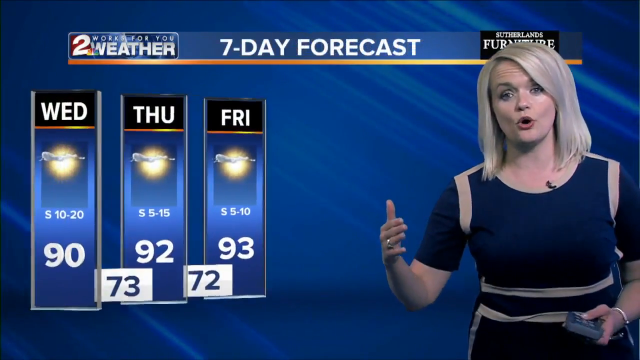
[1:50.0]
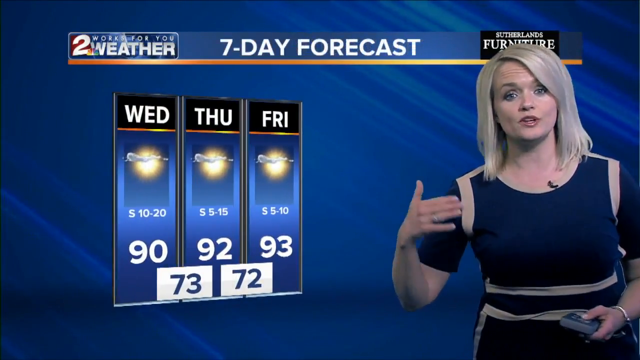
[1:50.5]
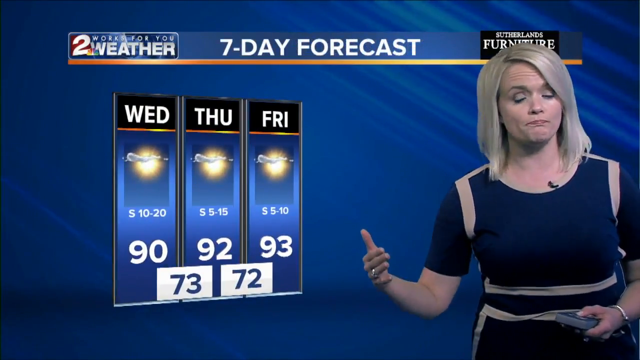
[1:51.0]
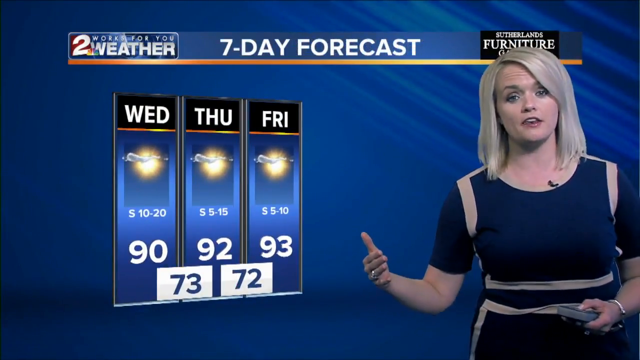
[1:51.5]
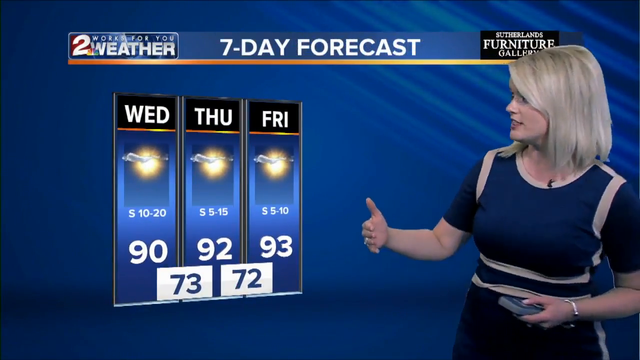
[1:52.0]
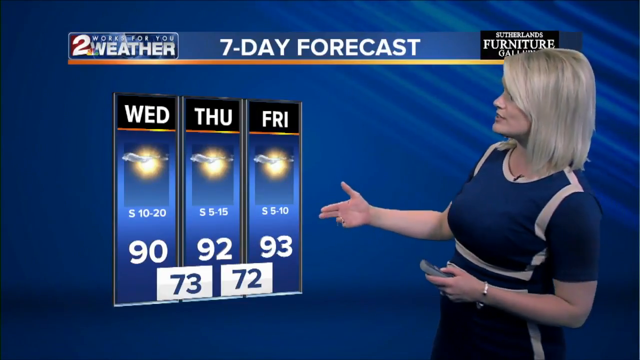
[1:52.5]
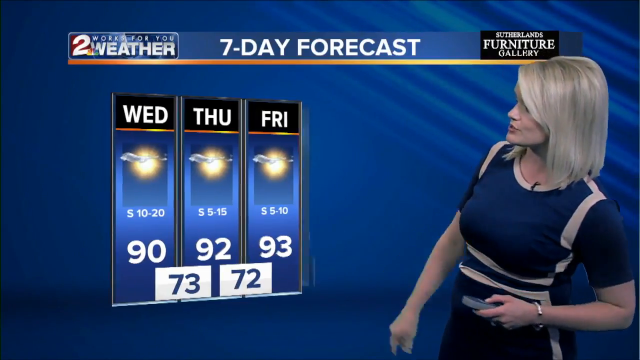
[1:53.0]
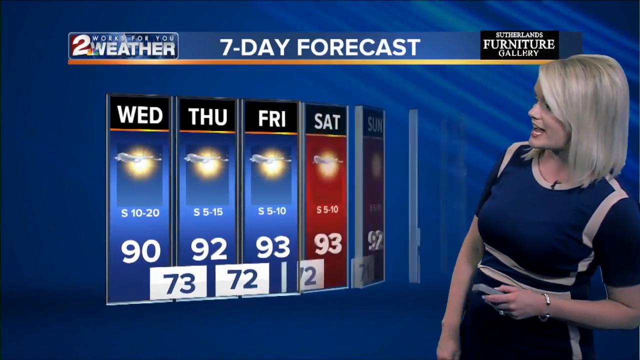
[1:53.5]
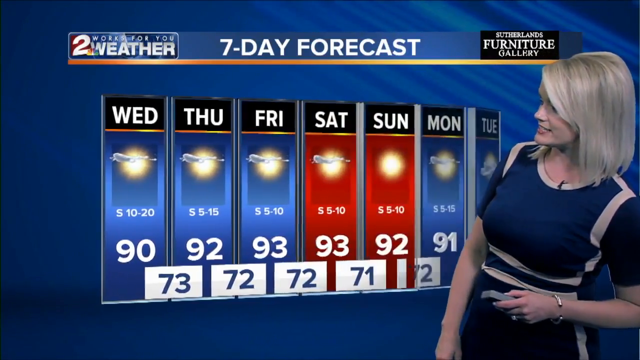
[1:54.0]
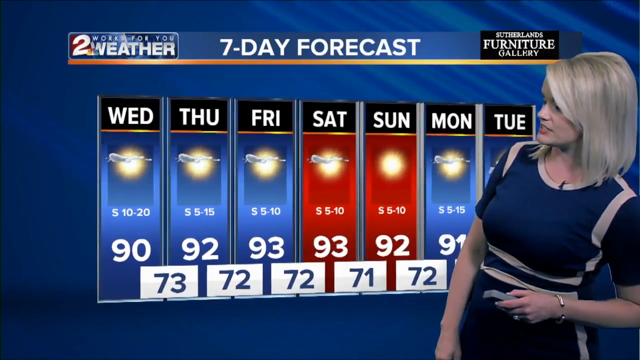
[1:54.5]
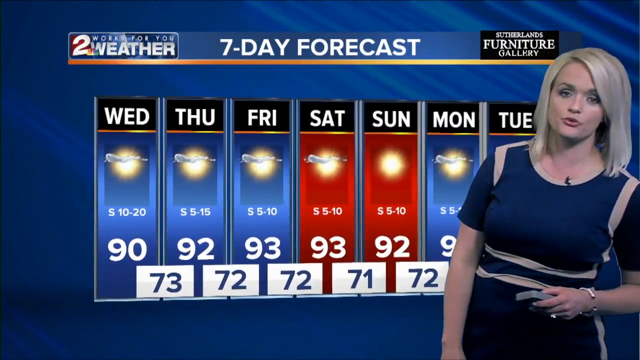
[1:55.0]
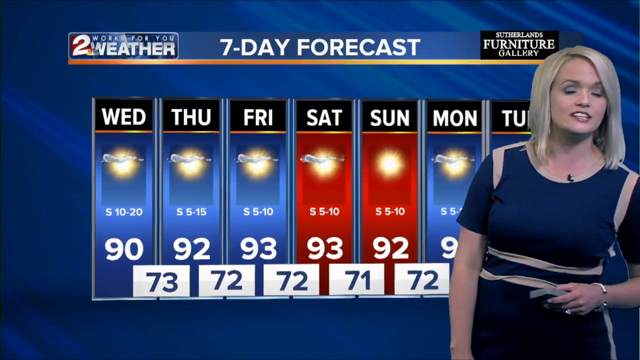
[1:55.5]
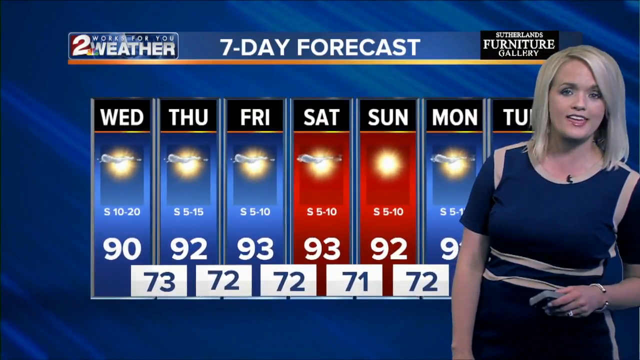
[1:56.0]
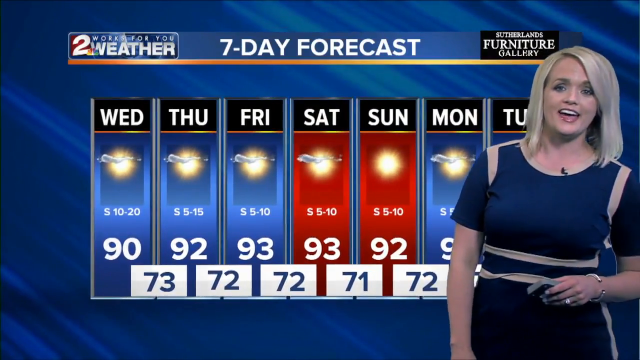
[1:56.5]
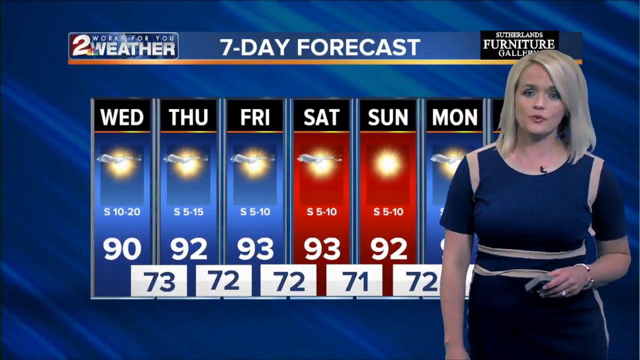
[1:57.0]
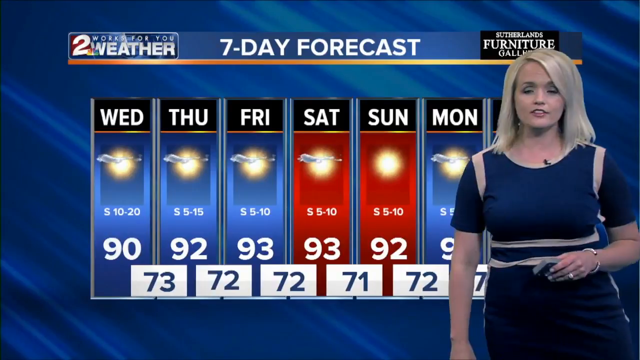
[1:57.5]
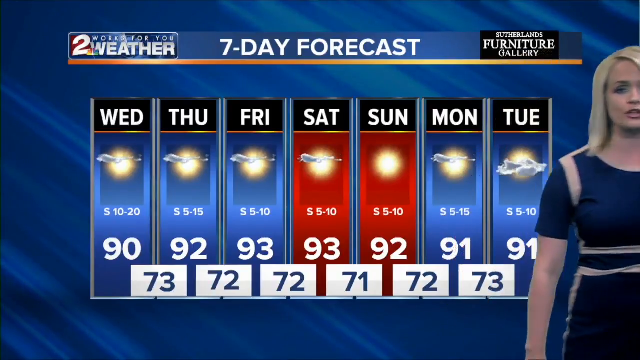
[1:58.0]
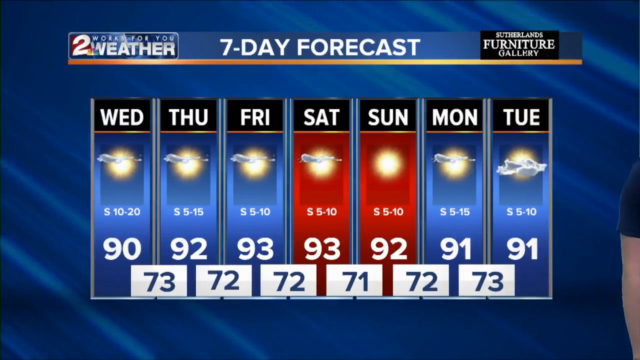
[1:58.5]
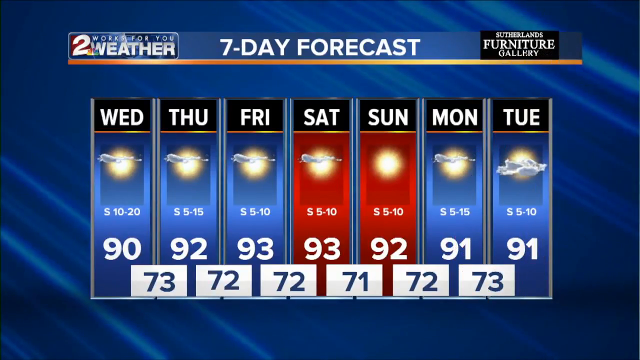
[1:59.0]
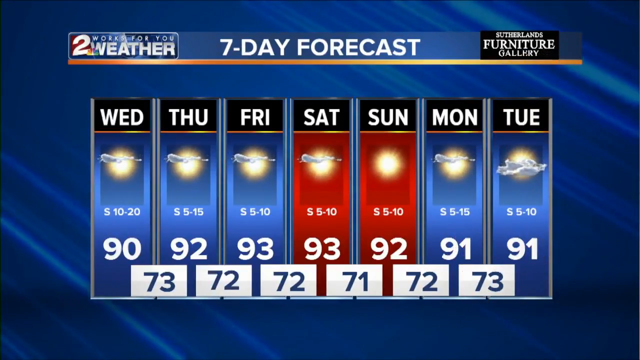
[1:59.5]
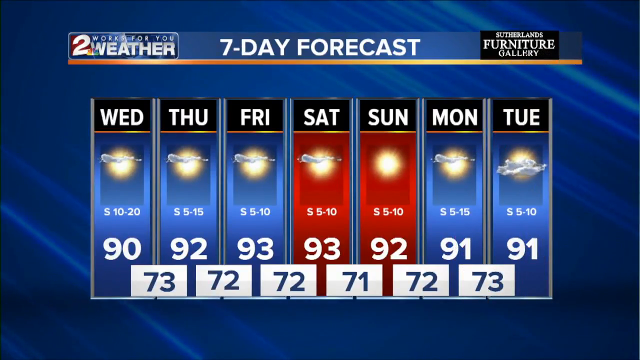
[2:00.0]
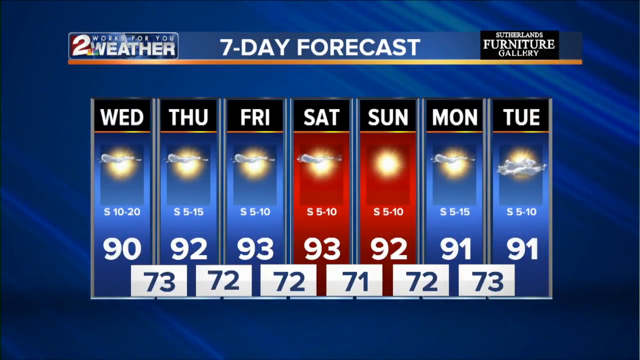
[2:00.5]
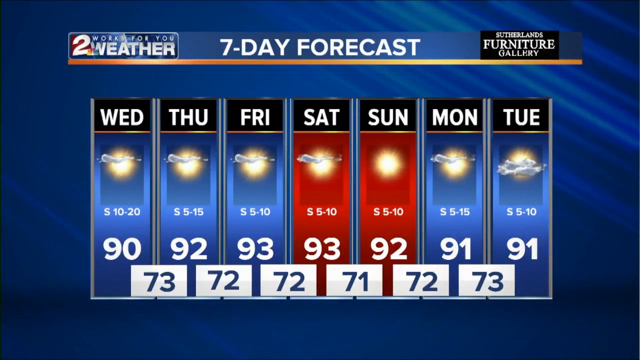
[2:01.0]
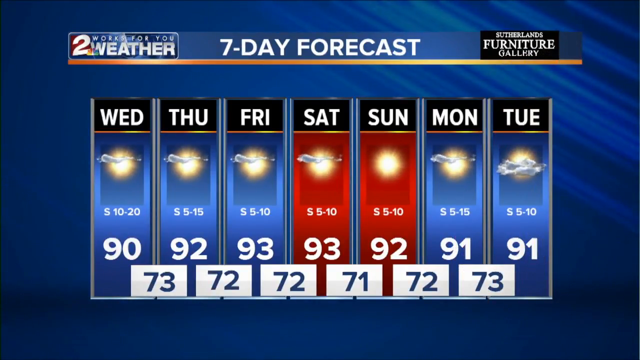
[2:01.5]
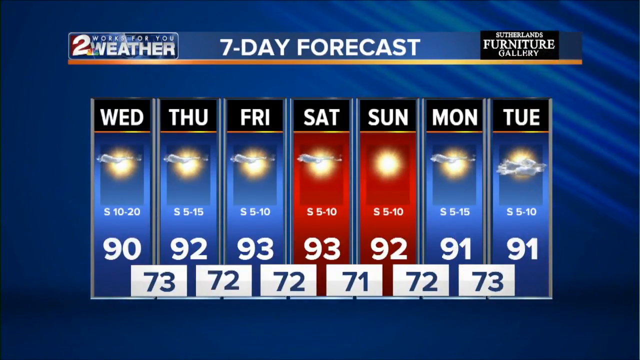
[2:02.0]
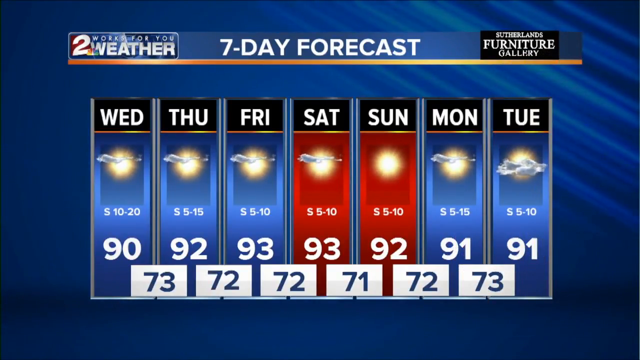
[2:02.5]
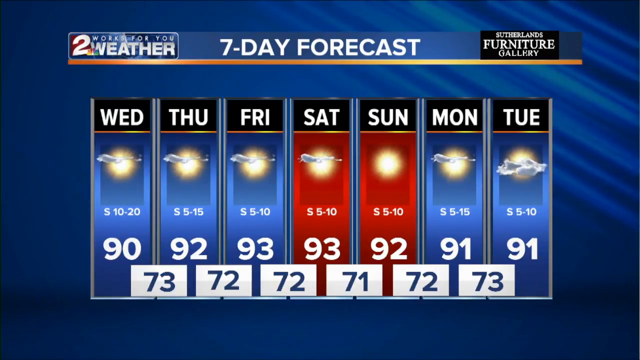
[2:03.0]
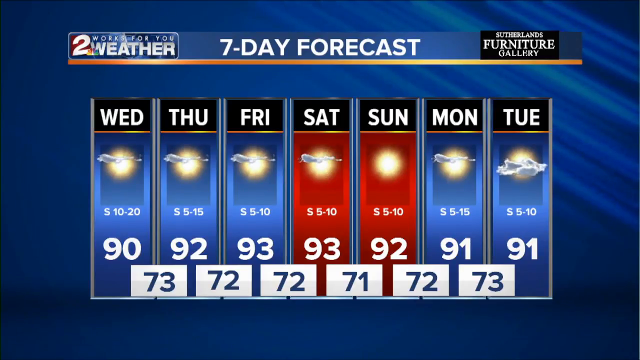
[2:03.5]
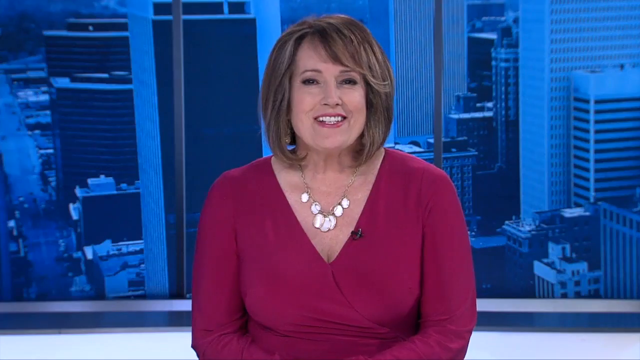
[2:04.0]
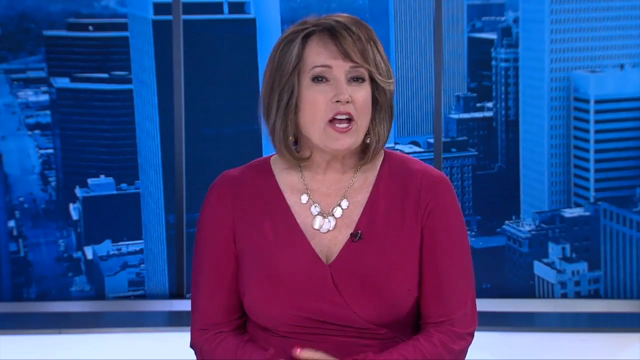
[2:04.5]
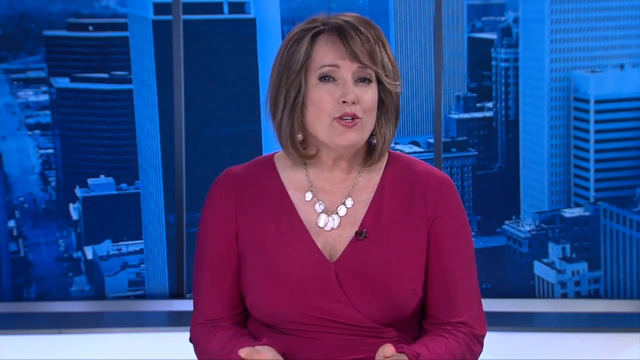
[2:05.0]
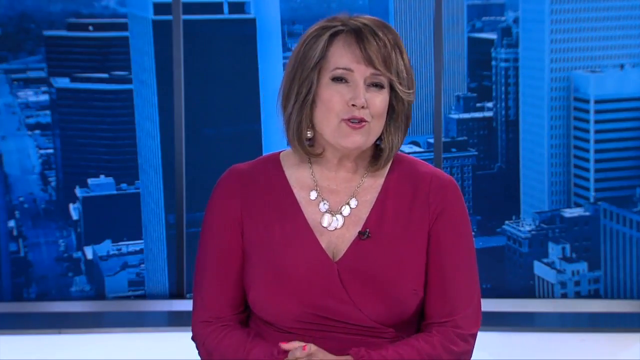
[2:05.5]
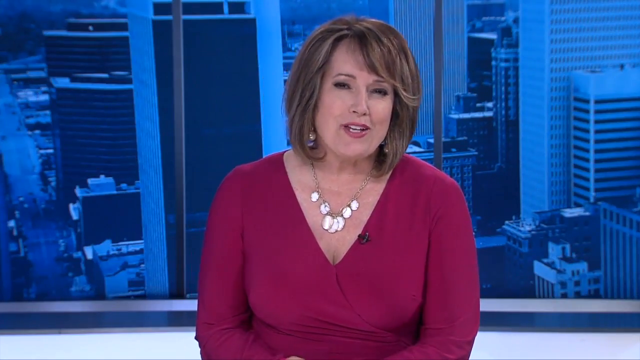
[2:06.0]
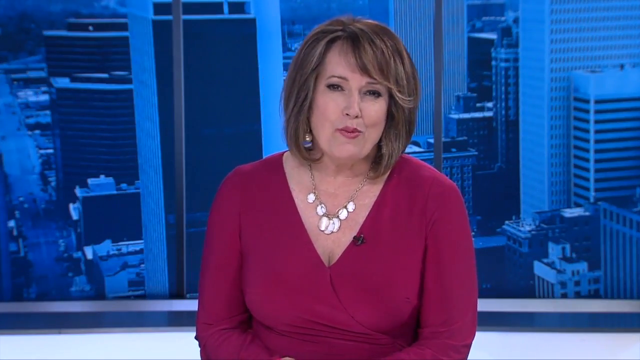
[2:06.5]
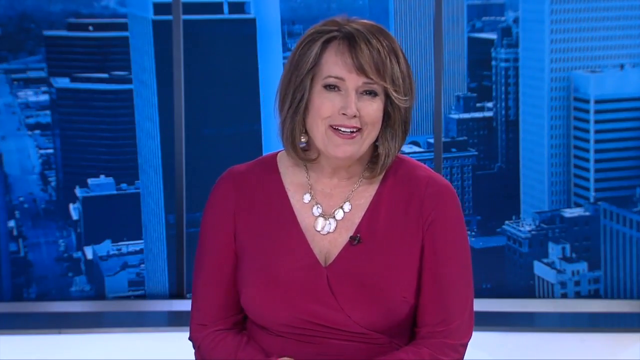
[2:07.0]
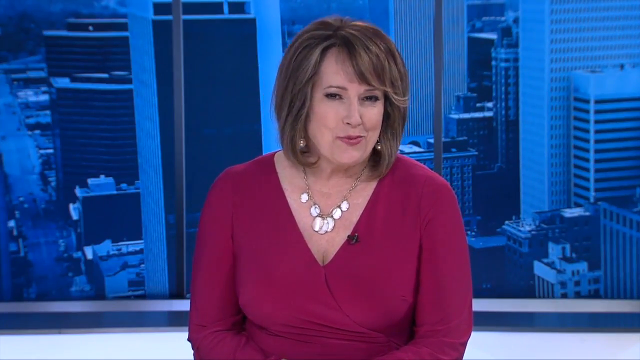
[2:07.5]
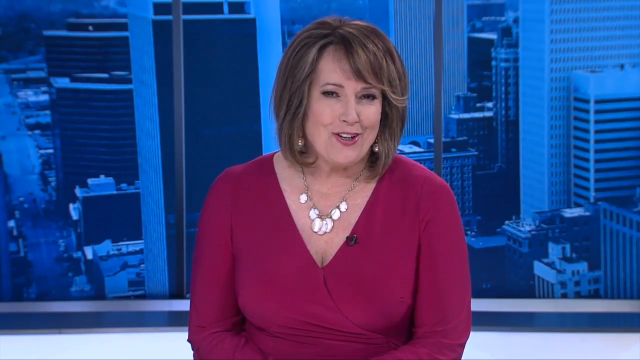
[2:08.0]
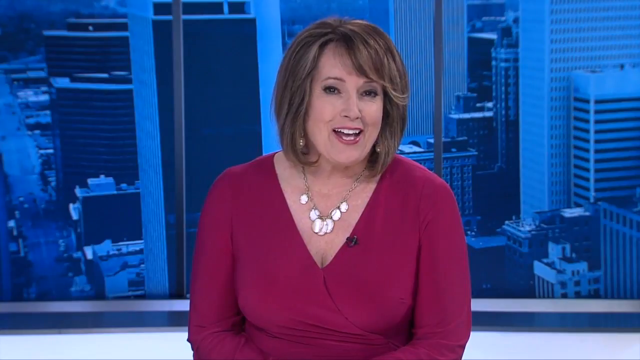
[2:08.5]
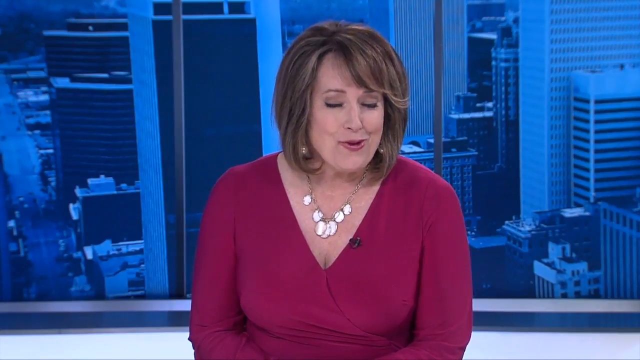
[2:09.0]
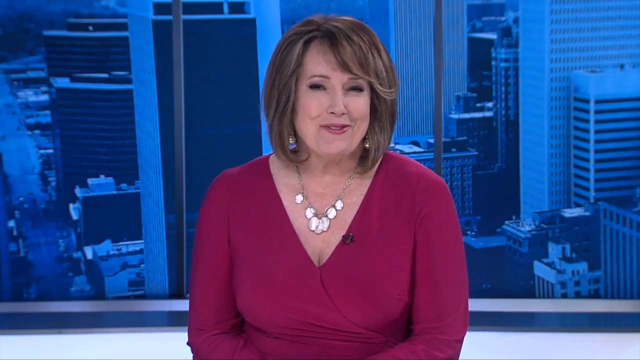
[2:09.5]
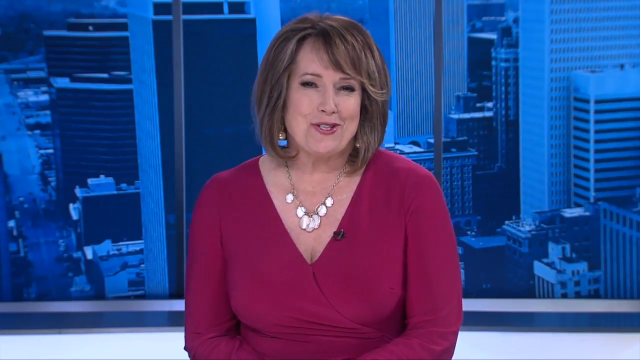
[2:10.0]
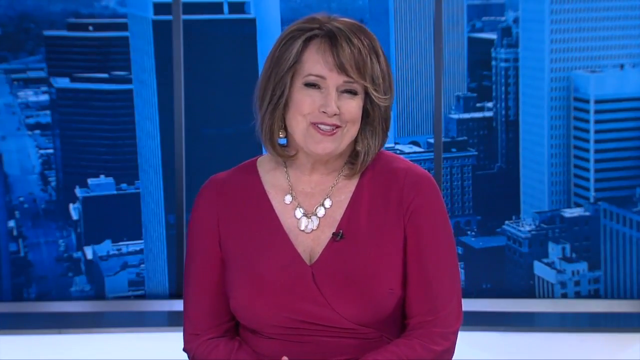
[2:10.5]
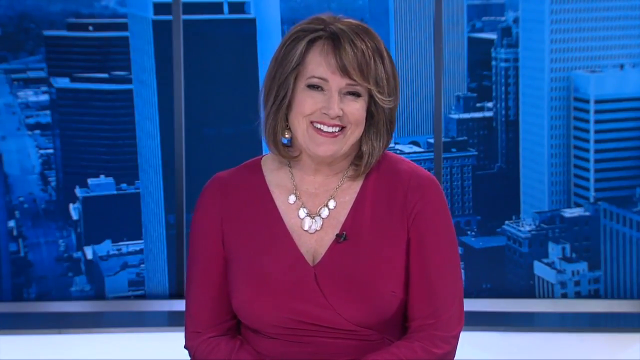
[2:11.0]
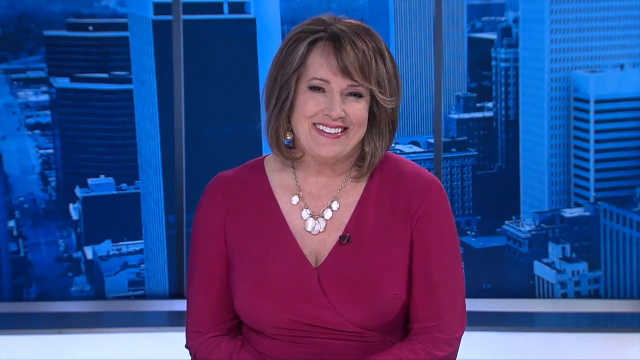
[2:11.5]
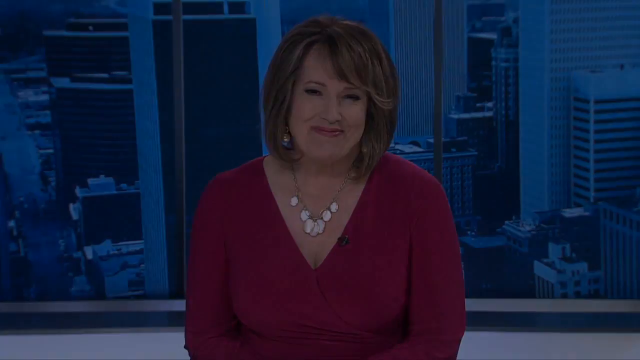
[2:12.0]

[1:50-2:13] The weather anchor keeps talking as the seven-day forecast is up, in white writing on a blue background. It shows highs and lows for Wednesday, Thursday and Friday and on through Tuesday, with images of sun and clouds depending on the day. The highs are mostly in the 90s and the lows in the low 70s. She seems to be talking off screen. The video returns to the main anchor at the desk, a Caucasian woman with a shoulder-length light brown bob with subtle highlights, wearing a cranberry-colored top and a necklace with silver discs. The background is a city image of buildings in blue tones. She talks to the camera.